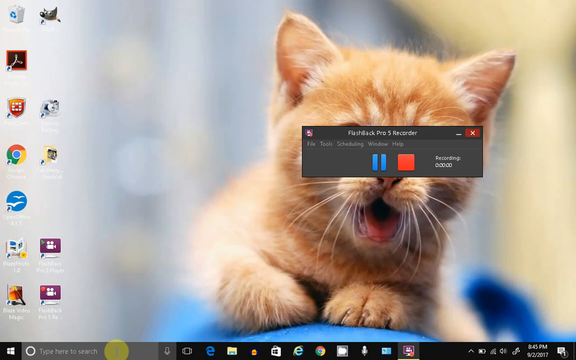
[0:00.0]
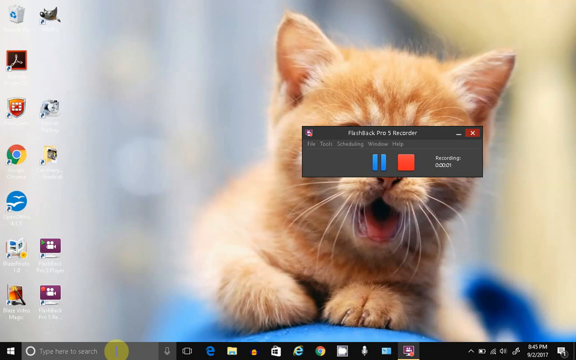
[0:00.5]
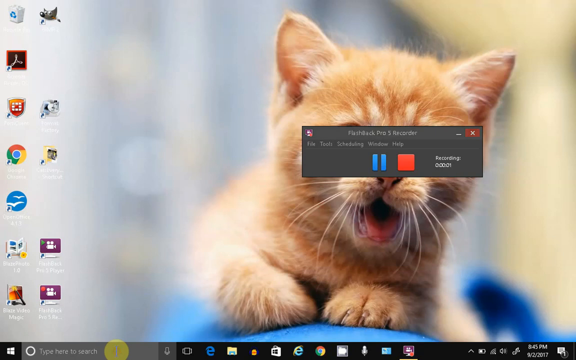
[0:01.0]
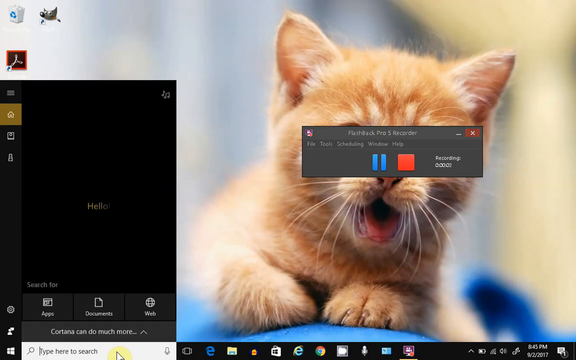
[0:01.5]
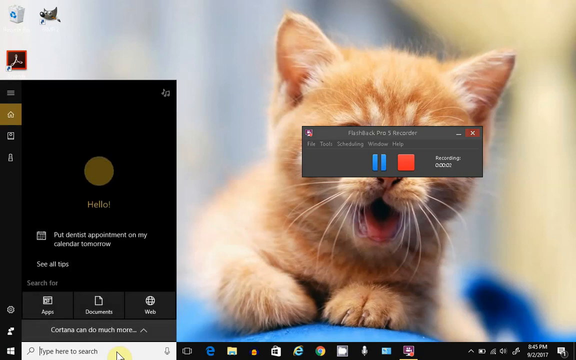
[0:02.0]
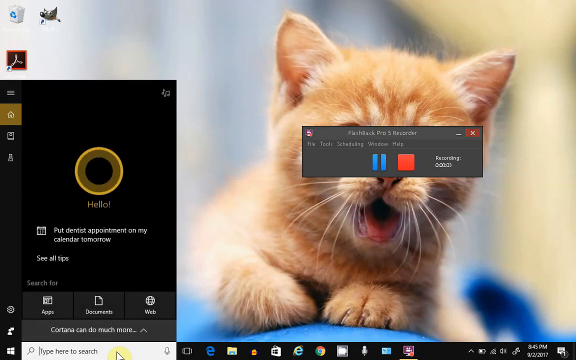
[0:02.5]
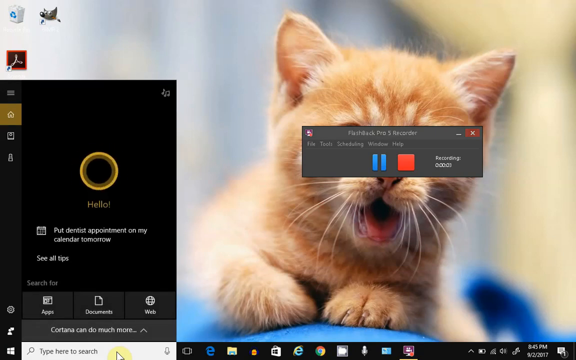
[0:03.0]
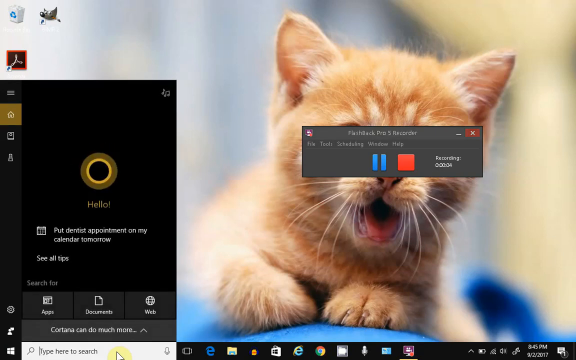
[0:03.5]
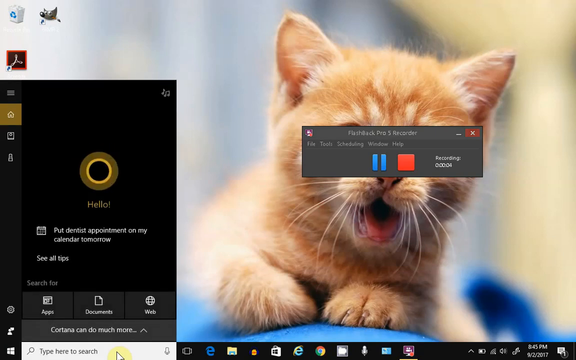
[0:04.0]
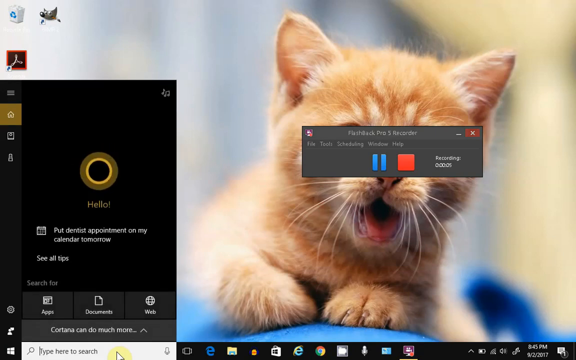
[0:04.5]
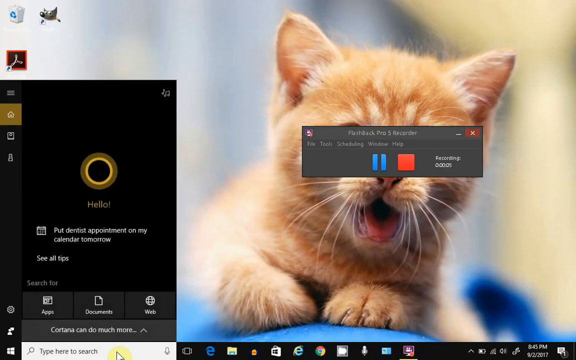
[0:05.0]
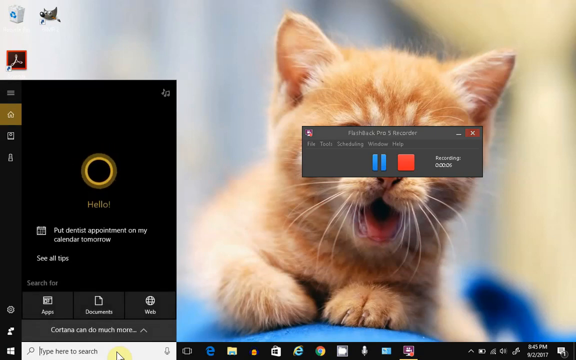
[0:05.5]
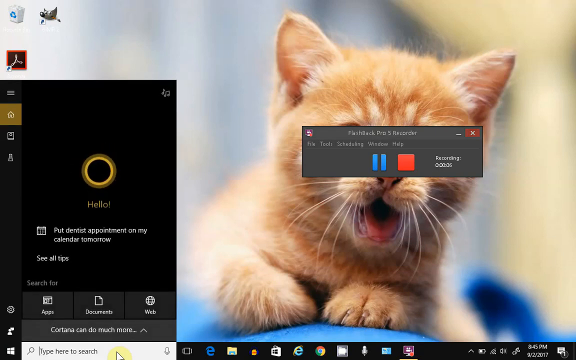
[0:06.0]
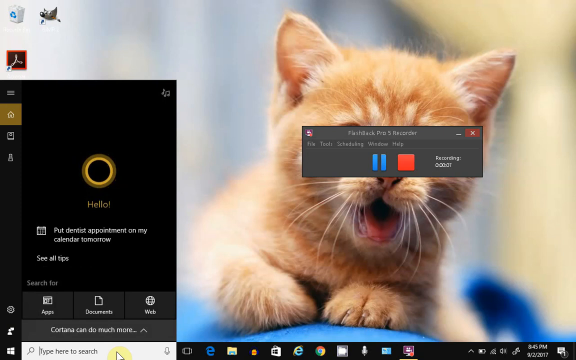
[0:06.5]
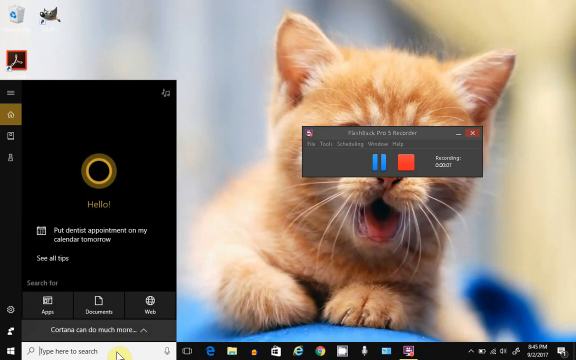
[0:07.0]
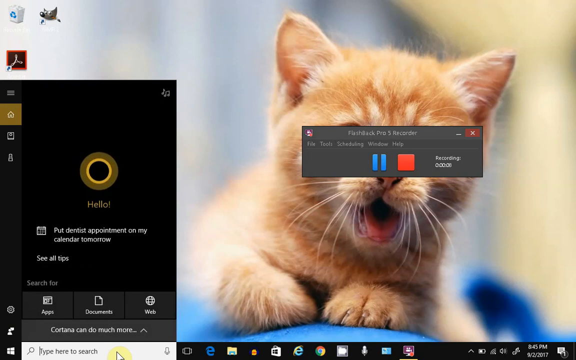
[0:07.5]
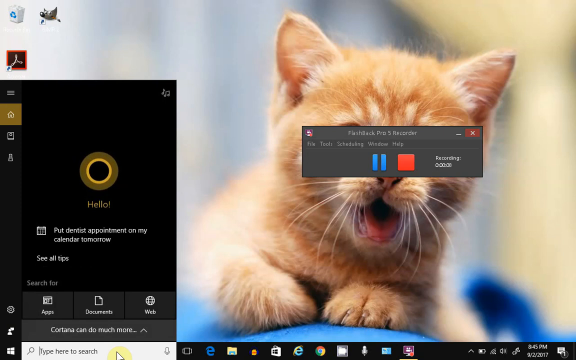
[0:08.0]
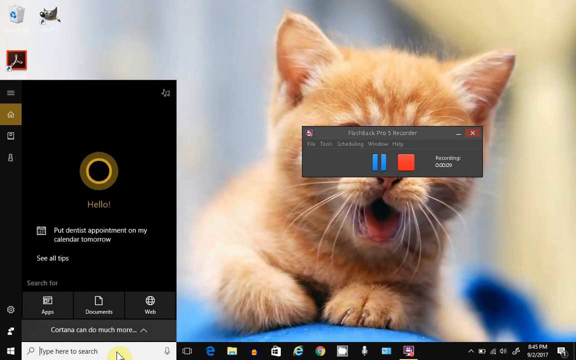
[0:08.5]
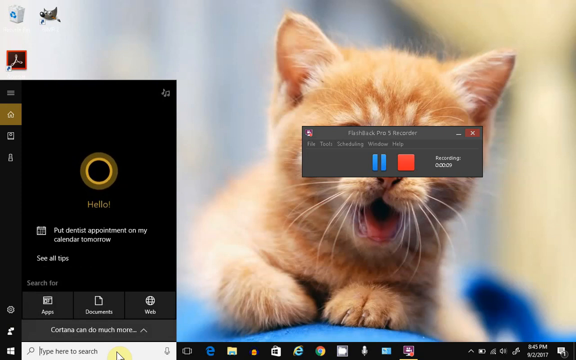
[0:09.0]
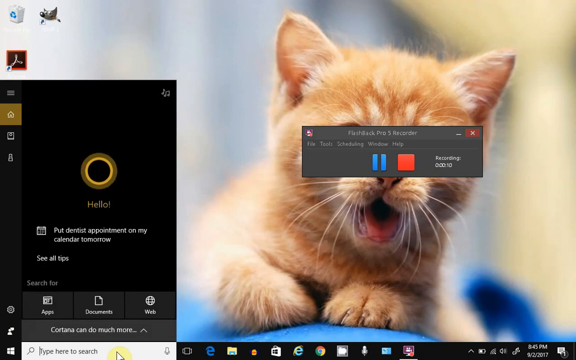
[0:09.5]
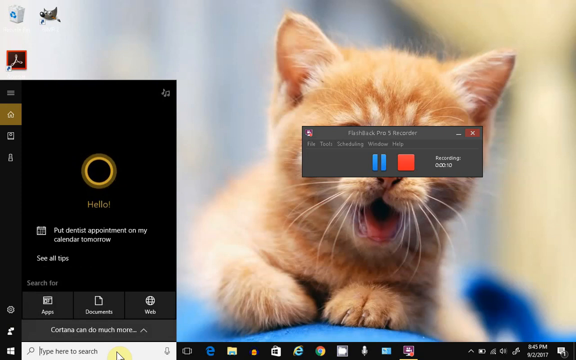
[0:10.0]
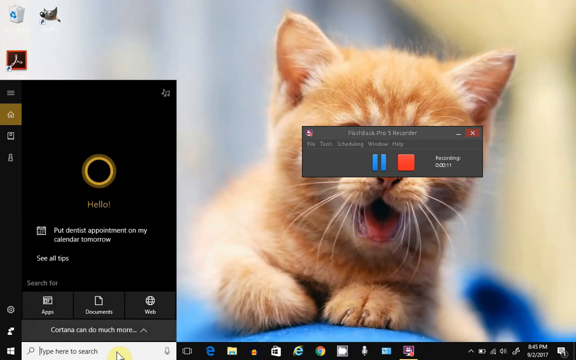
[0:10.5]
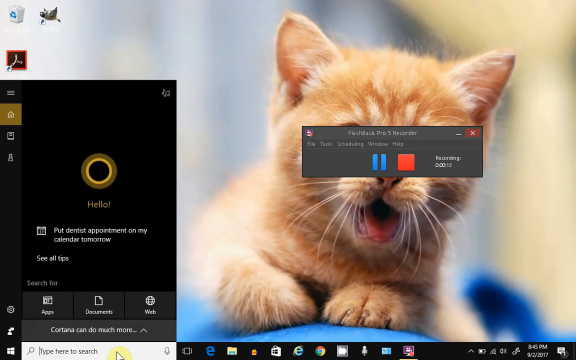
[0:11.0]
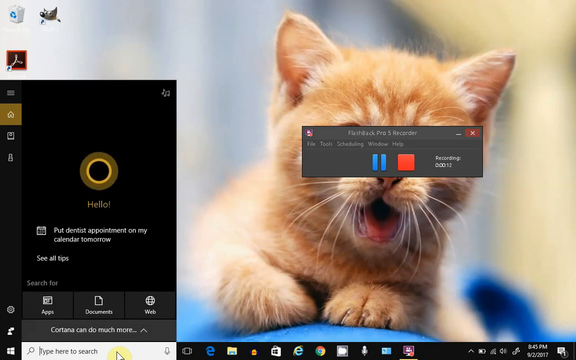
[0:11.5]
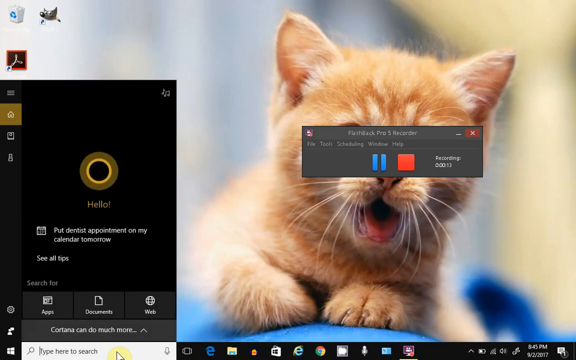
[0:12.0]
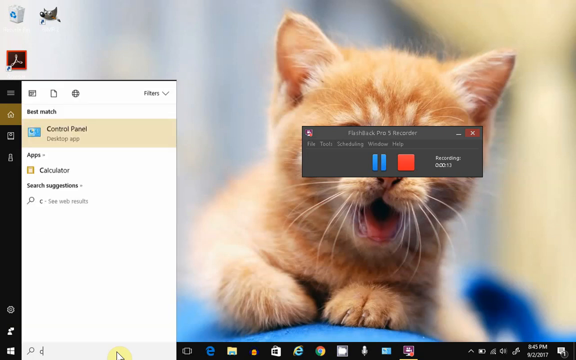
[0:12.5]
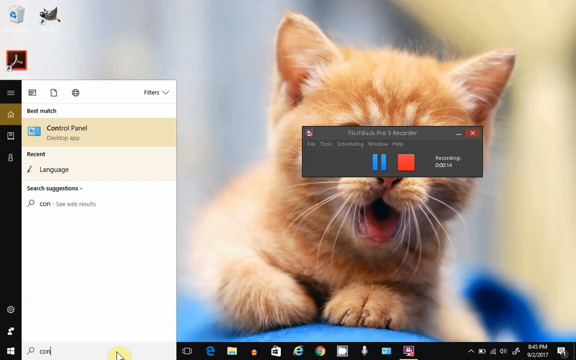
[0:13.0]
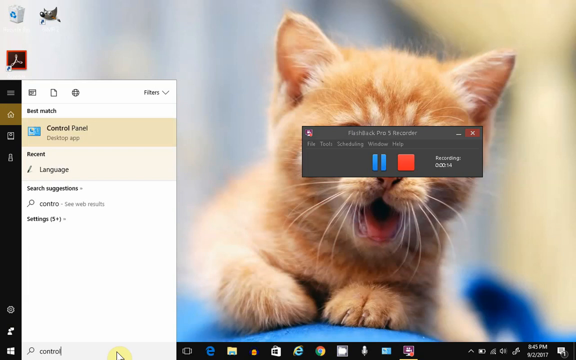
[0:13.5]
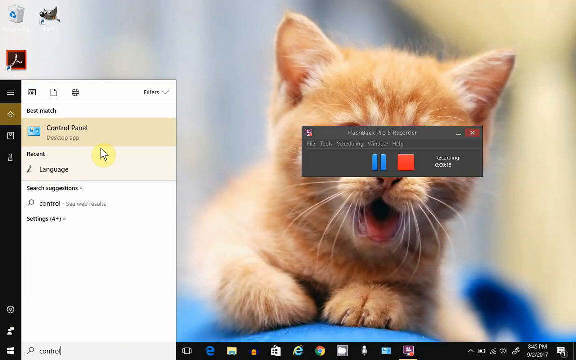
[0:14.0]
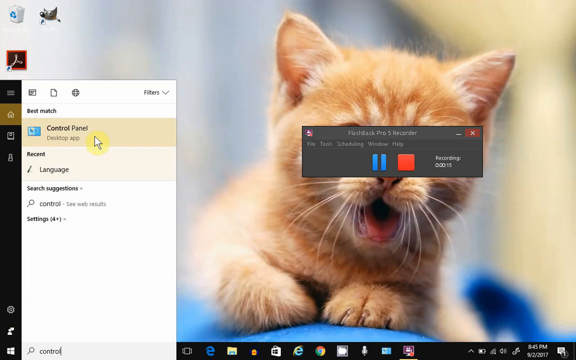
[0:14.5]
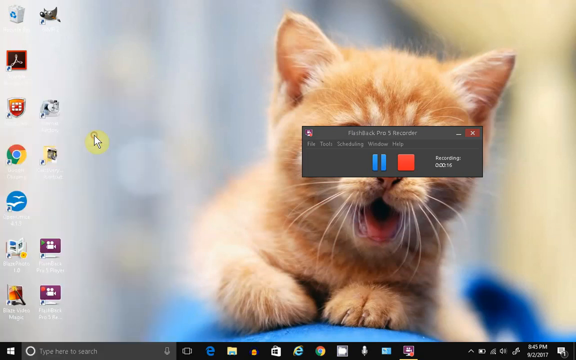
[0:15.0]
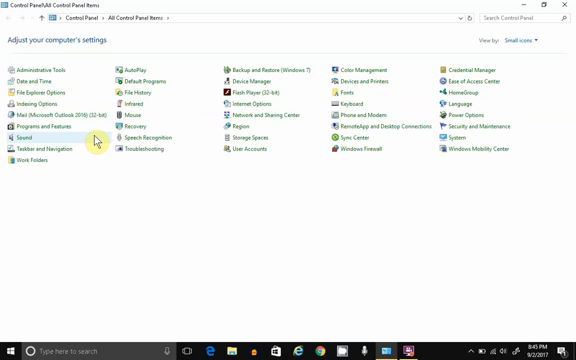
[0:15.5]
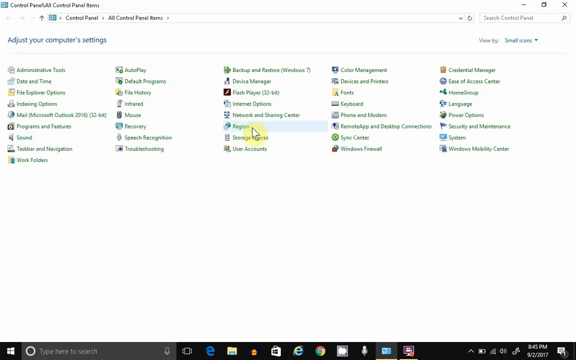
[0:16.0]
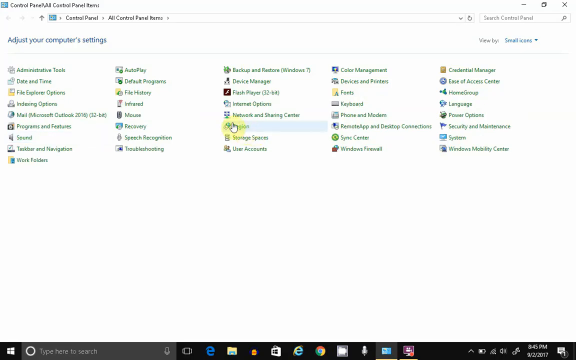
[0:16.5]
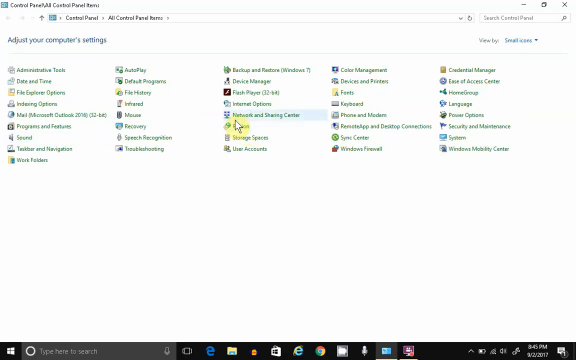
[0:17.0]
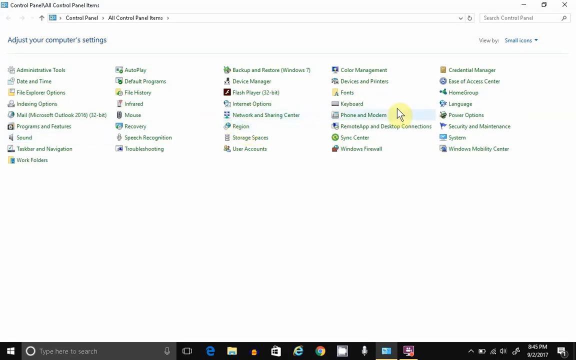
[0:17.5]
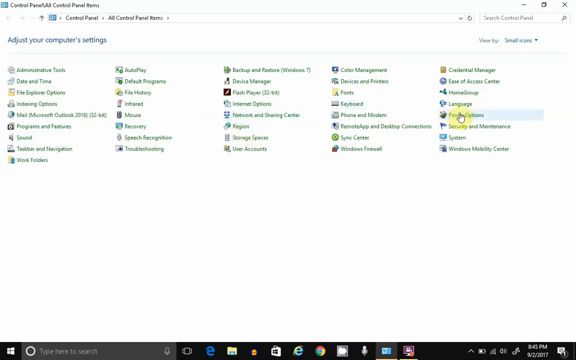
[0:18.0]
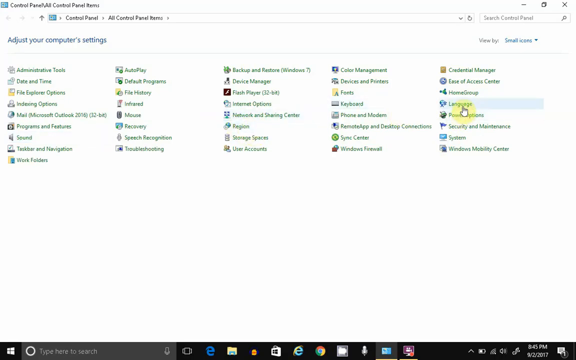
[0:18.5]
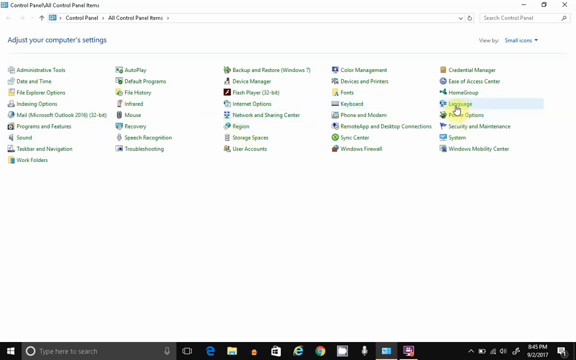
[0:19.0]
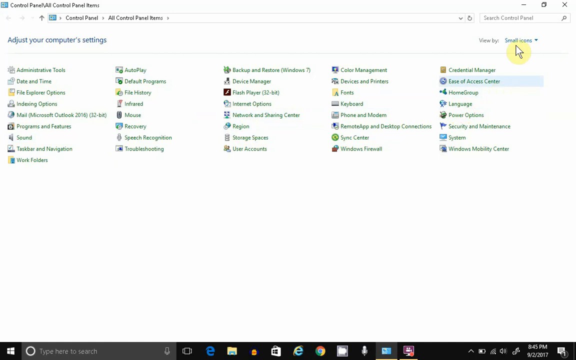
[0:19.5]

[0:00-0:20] An orange tabby cat appears on a computer screen, with a pop-up blocking the cat's eyes and part of its nose. The pop-up says "hello" and might be a message from somebody; below it there is a message in white, and the pop-up has an icon of a copper-brownish circle with a black dot in the middle. The cat looks like it is standing up on something, with its front paws shown. Its mouth is open, so it may be meowing. An M on its forehead marks it as a tabby, and it is red and cream colored. A person moves the cursor over the screen and clicks. The browser is visible. They click on the control panel, look for language and click on it, then click at the top of the screen, bringing the cursor up and setting it.